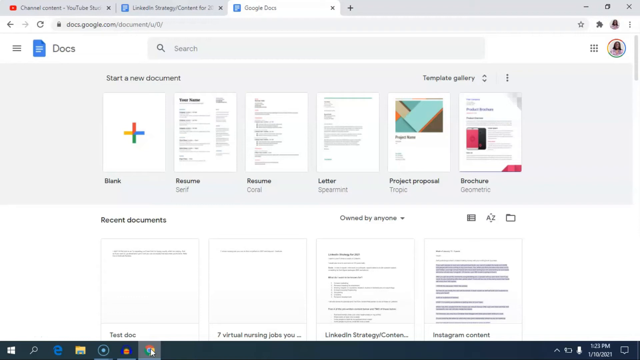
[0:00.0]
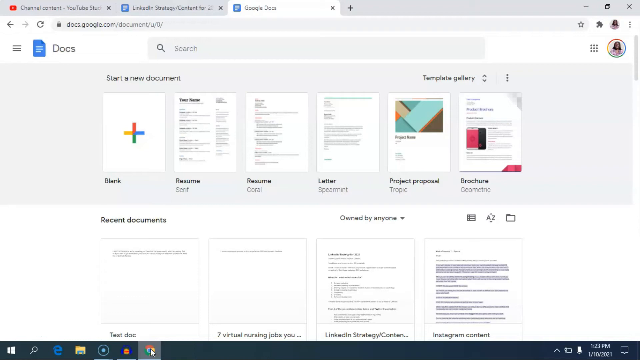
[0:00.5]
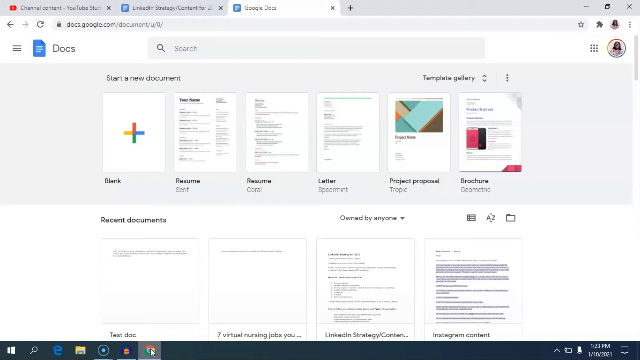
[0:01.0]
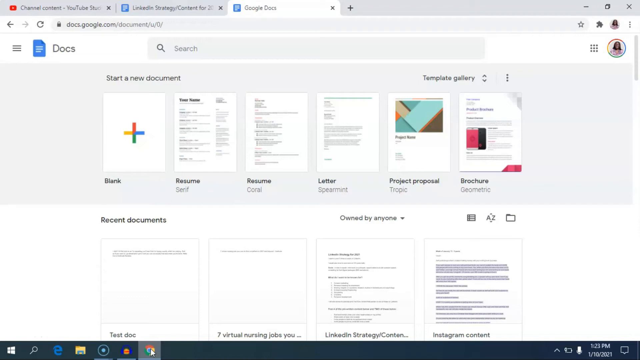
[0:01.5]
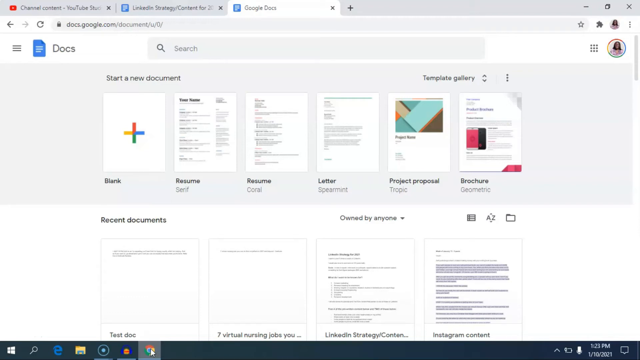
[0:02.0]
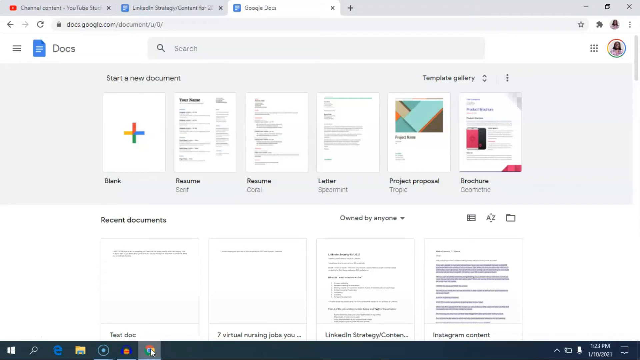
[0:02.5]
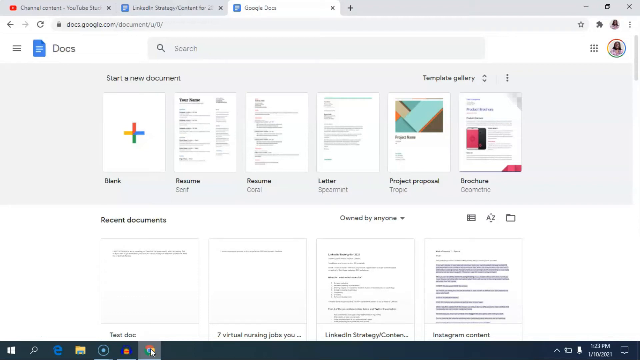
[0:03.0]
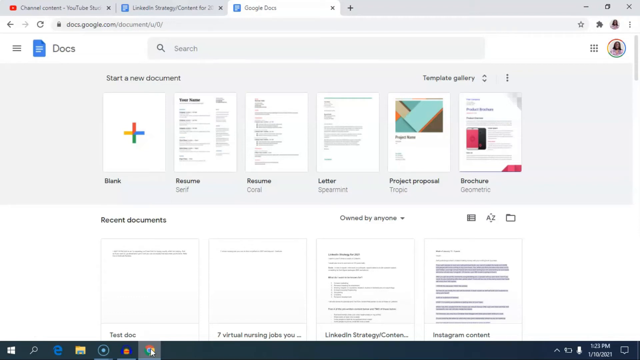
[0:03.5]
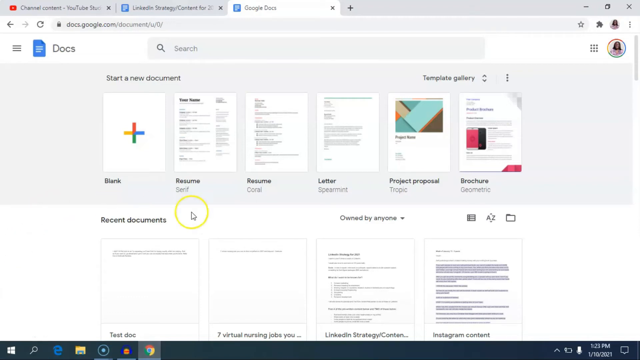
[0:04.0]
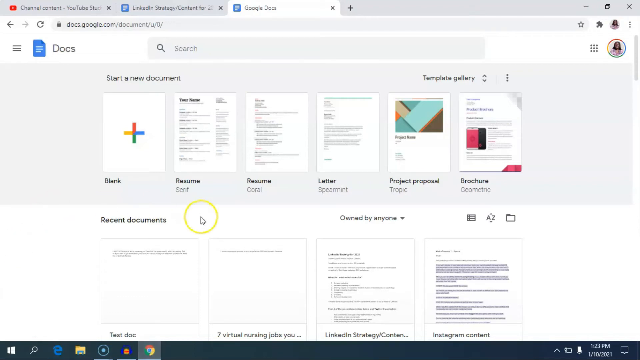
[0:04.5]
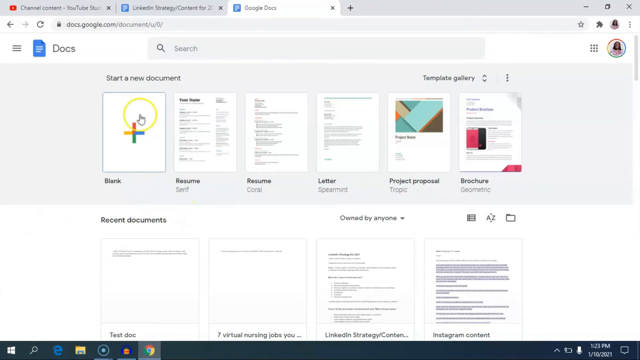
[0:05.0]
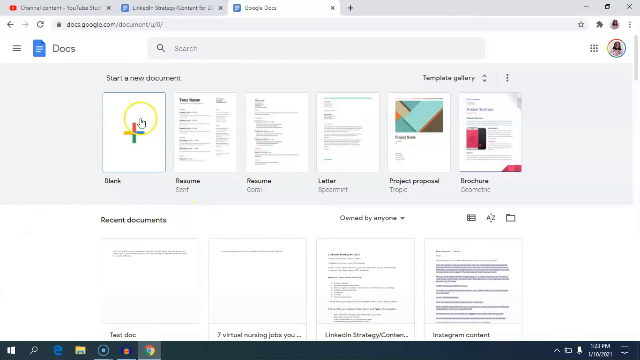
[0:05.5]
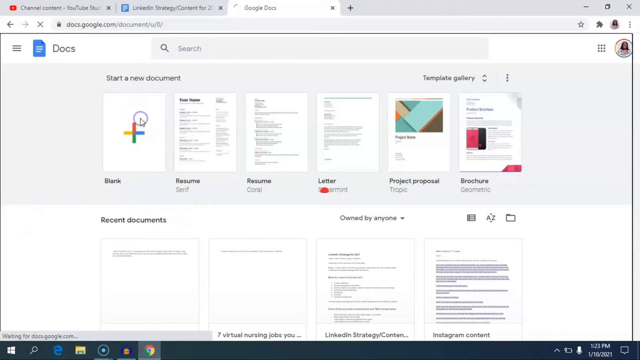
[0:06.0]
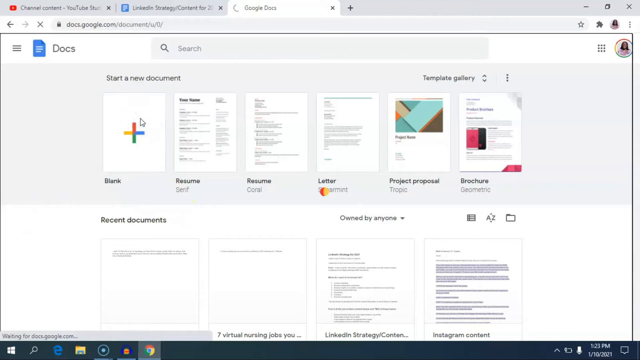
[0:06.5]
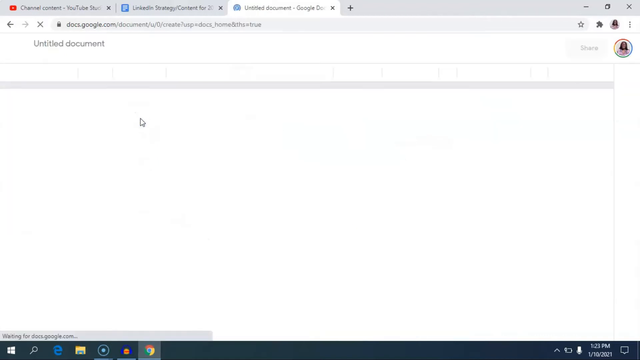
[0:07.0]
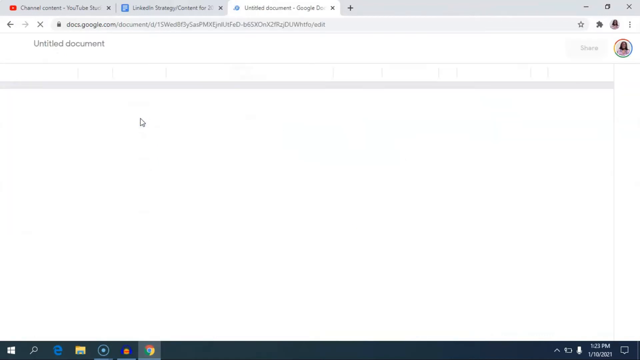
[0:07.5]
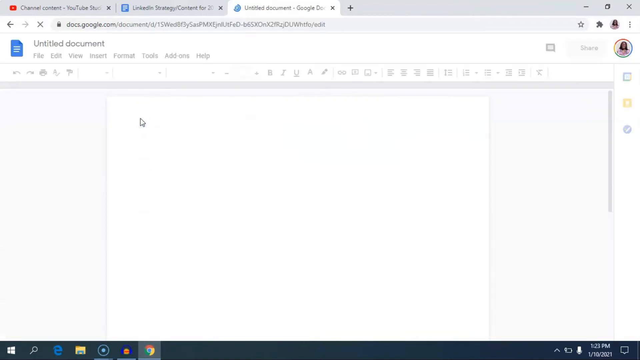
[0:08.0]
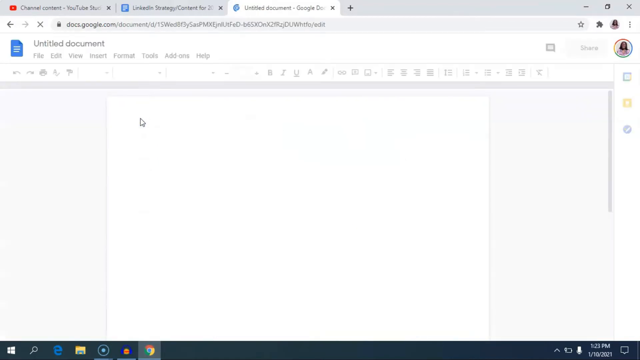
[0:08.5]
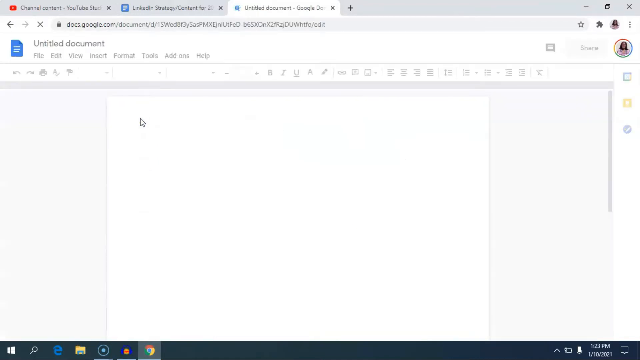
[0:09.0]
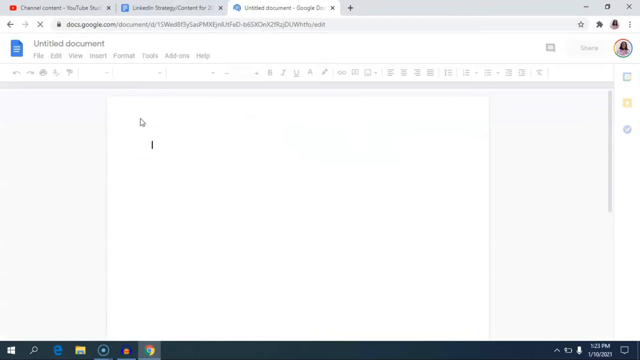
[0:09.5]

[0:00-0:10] Someone is on the Google Docs home screen. The Docs logo is at the top left, with a sort of hamburger menu icon to the left of it. A profile picture is at the top right; it looks like a girl with long dark brown hair, apparently the same person making the video. Three tabs are open at the top, from left to right: YouTube, a Google Doc, and another Google Doc.